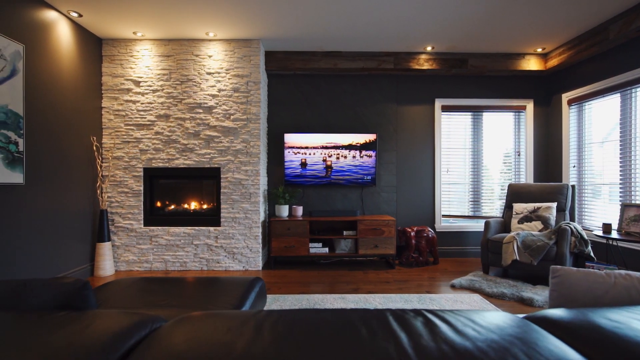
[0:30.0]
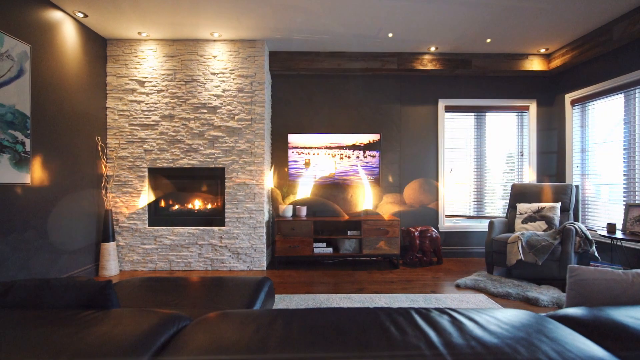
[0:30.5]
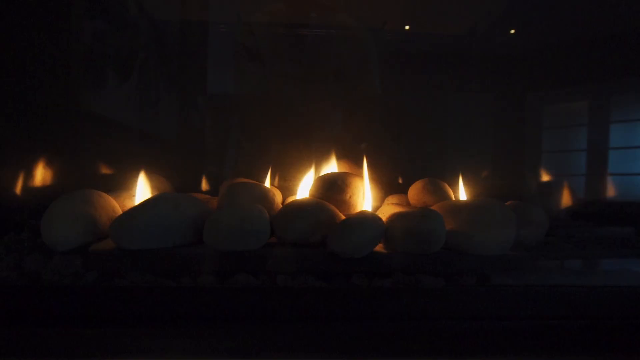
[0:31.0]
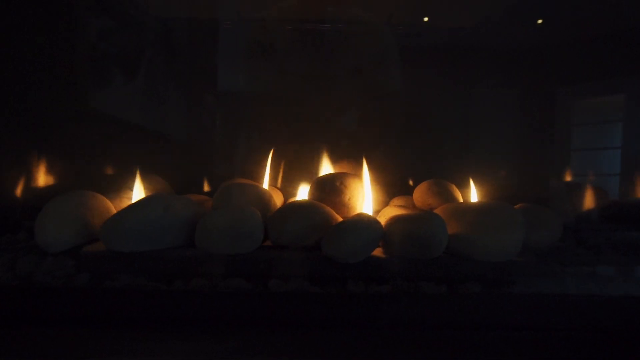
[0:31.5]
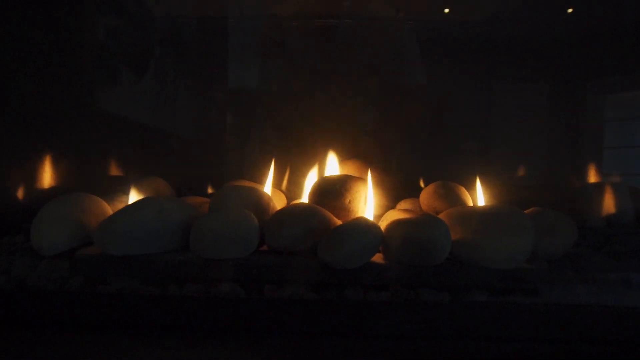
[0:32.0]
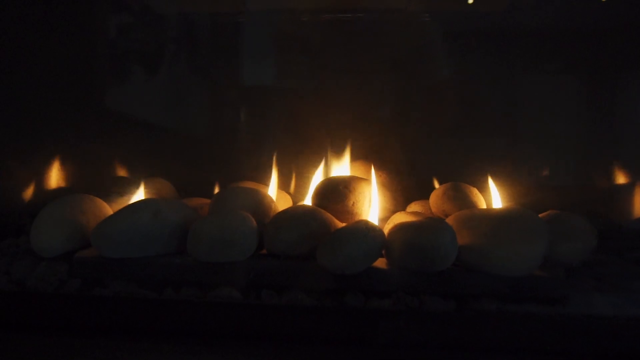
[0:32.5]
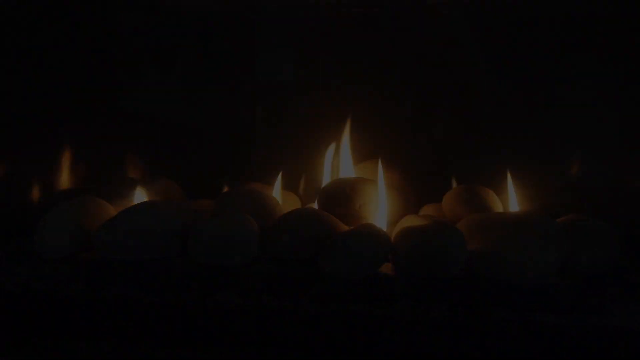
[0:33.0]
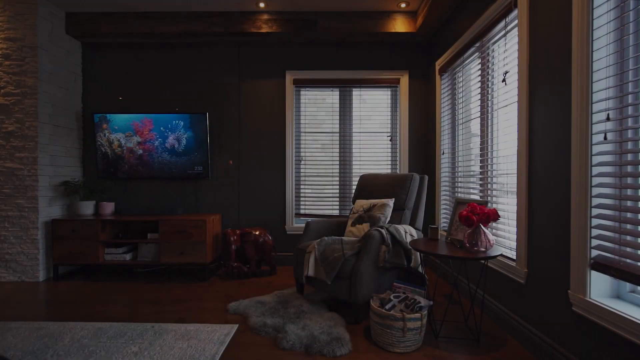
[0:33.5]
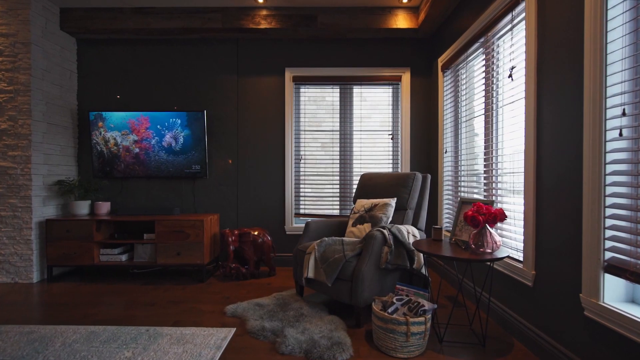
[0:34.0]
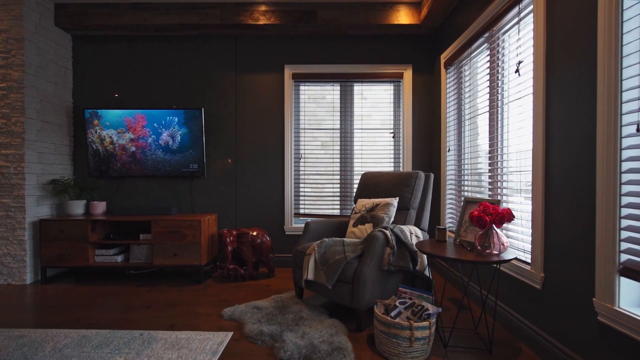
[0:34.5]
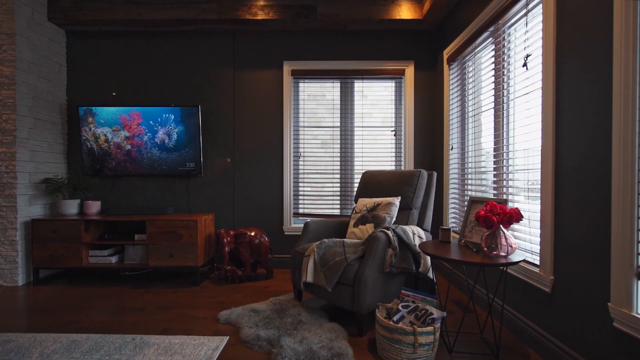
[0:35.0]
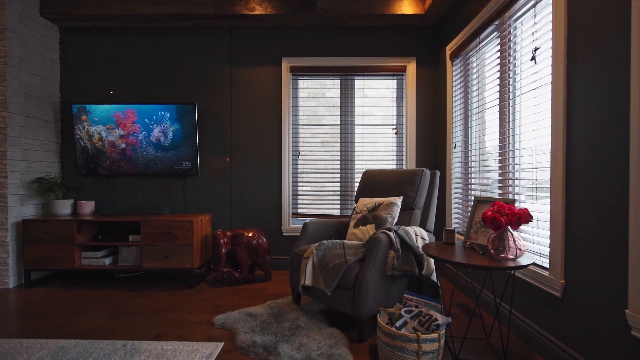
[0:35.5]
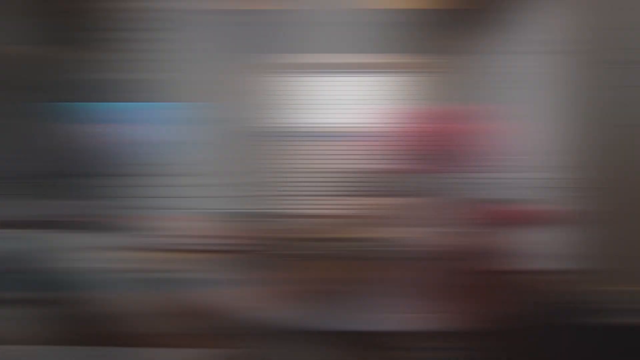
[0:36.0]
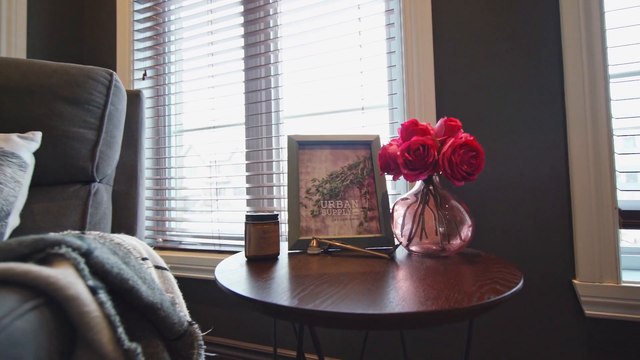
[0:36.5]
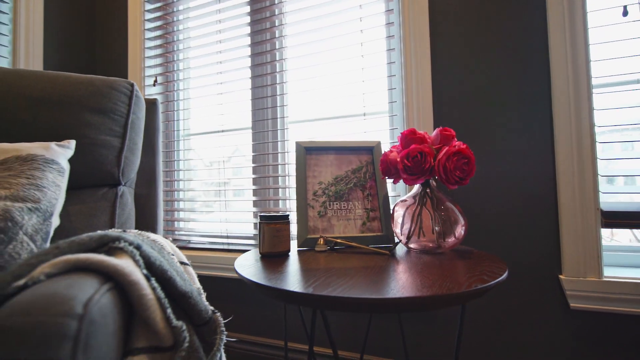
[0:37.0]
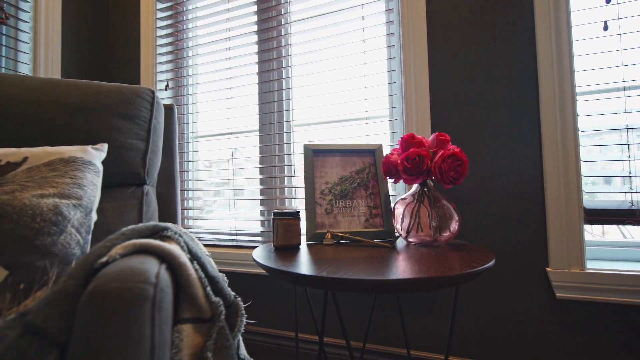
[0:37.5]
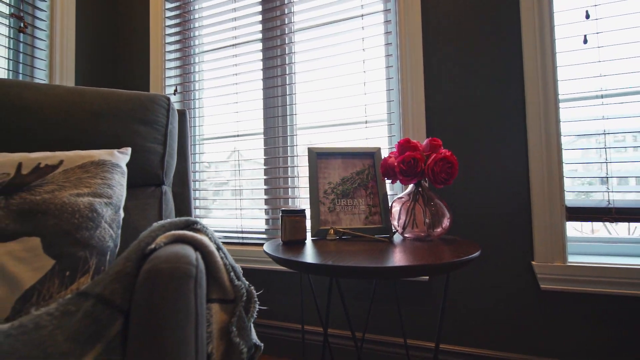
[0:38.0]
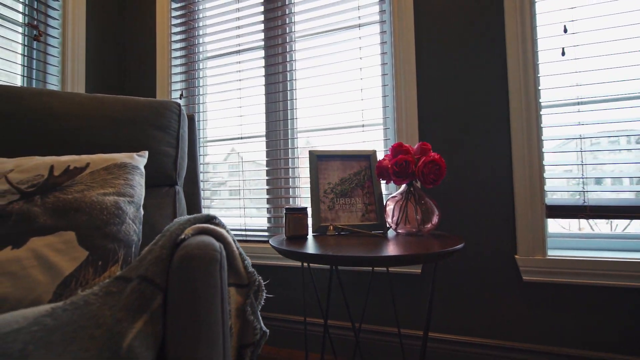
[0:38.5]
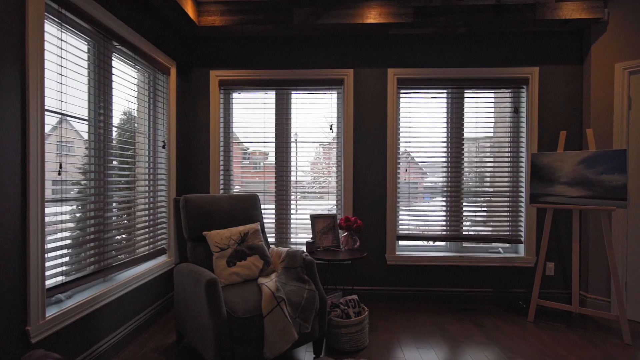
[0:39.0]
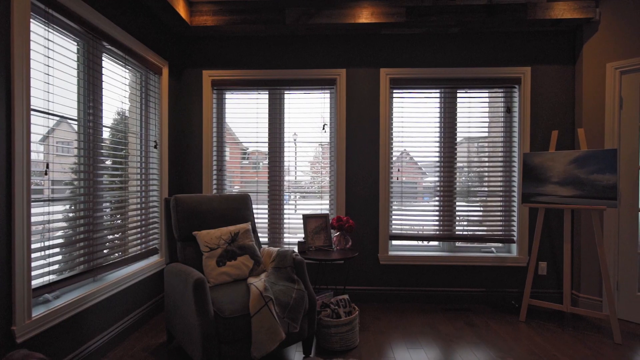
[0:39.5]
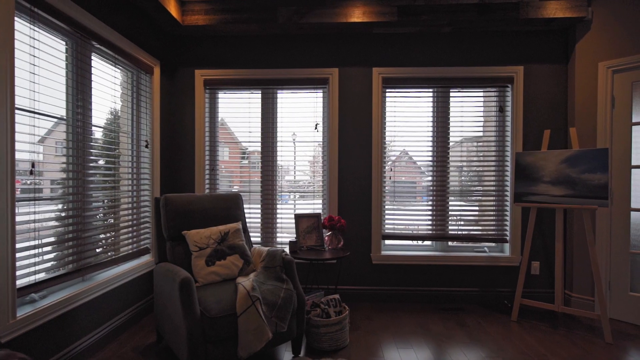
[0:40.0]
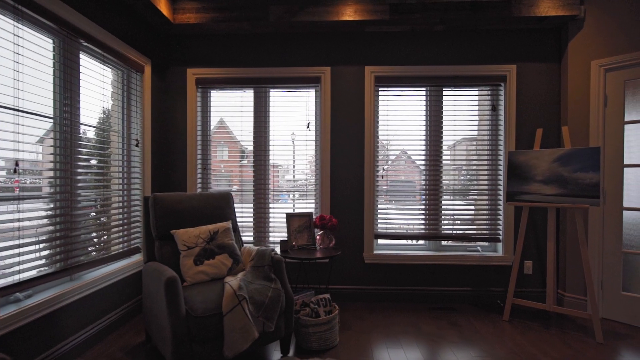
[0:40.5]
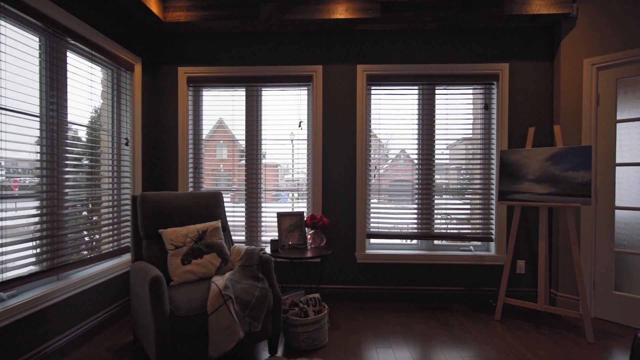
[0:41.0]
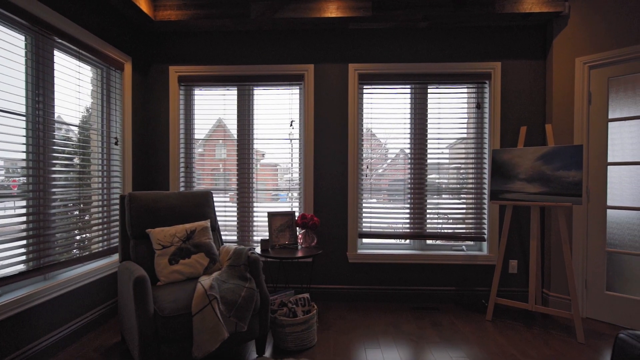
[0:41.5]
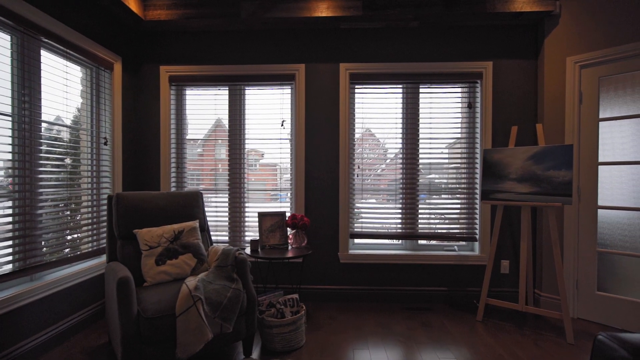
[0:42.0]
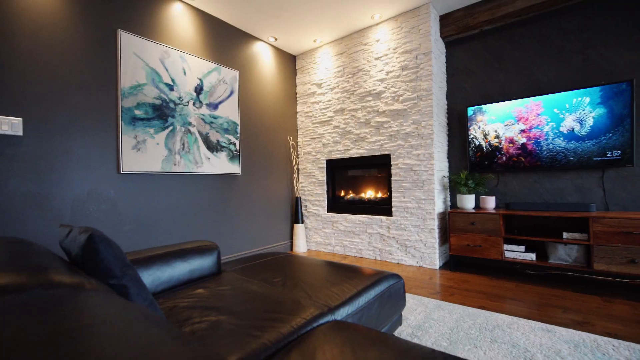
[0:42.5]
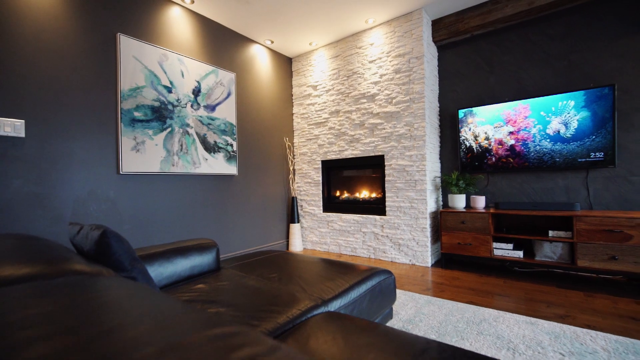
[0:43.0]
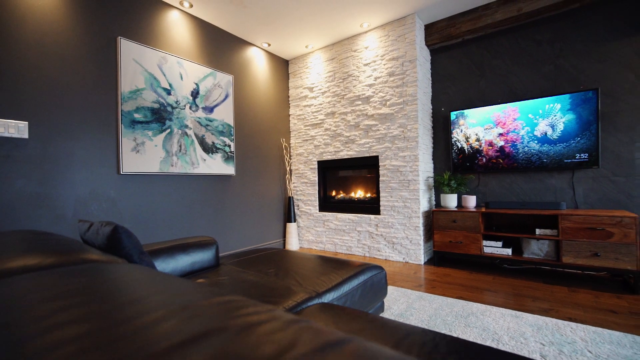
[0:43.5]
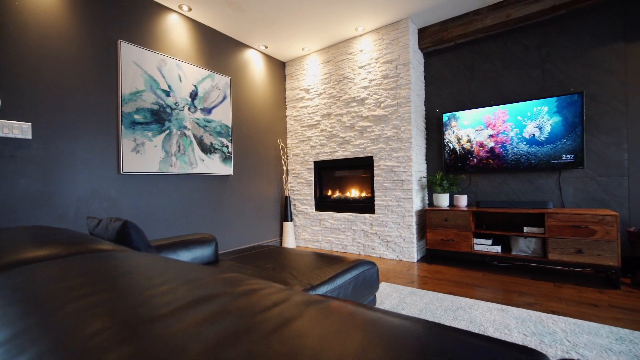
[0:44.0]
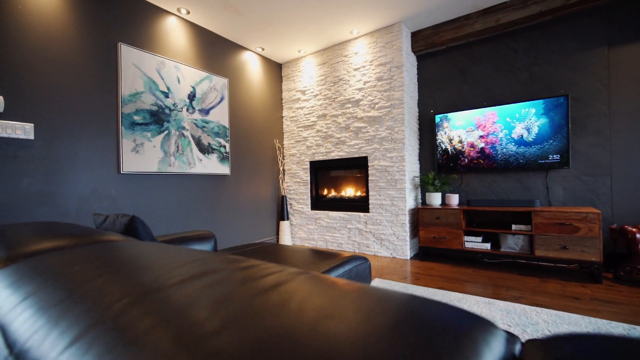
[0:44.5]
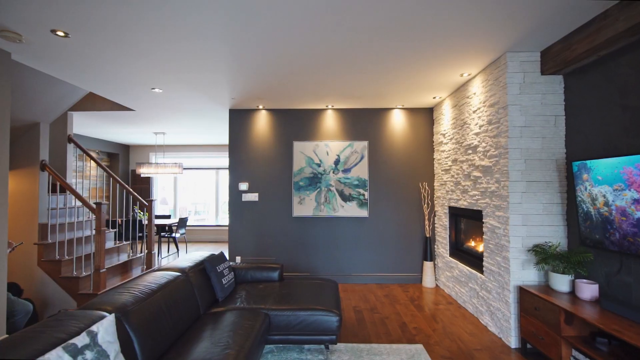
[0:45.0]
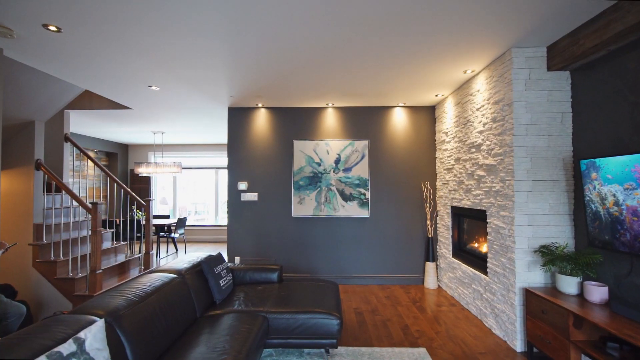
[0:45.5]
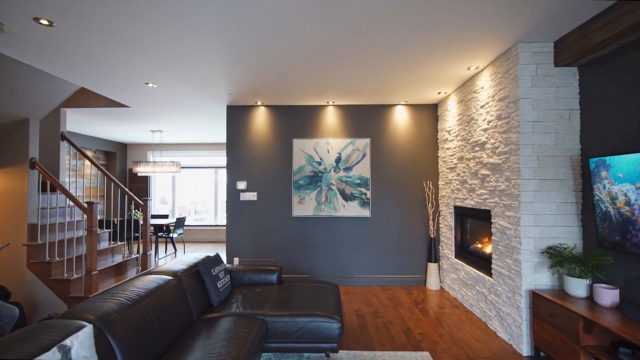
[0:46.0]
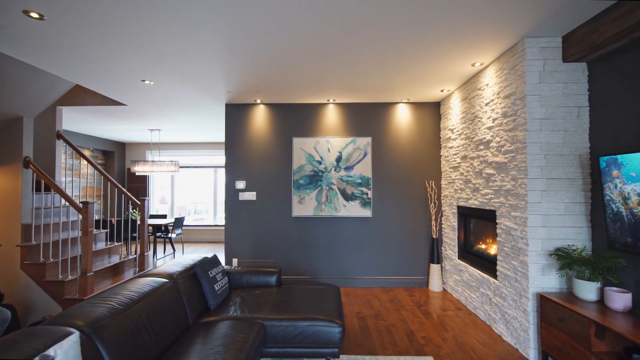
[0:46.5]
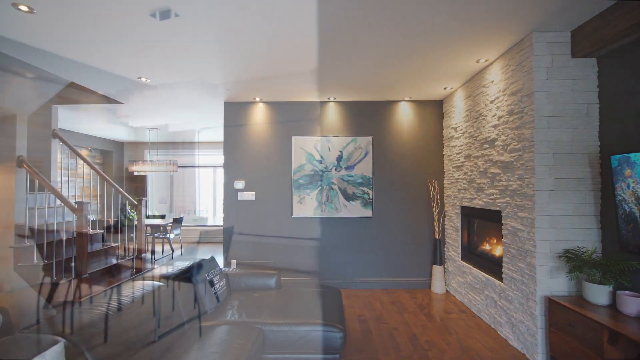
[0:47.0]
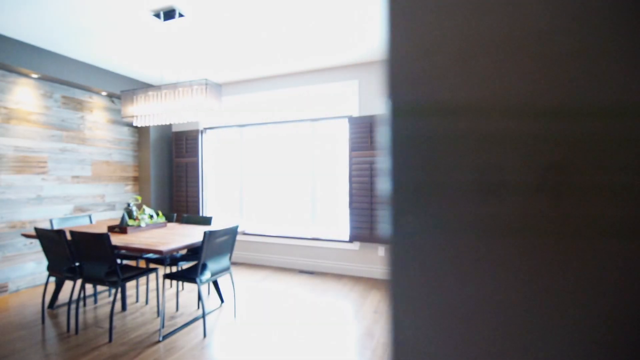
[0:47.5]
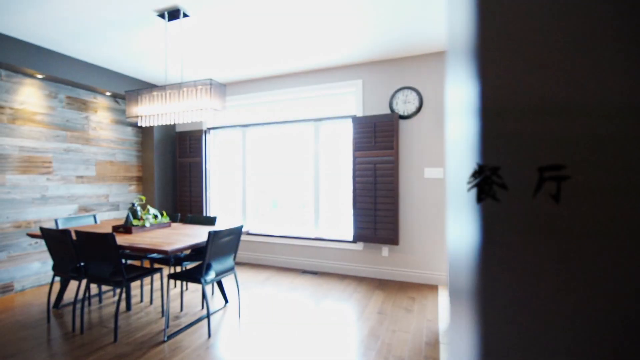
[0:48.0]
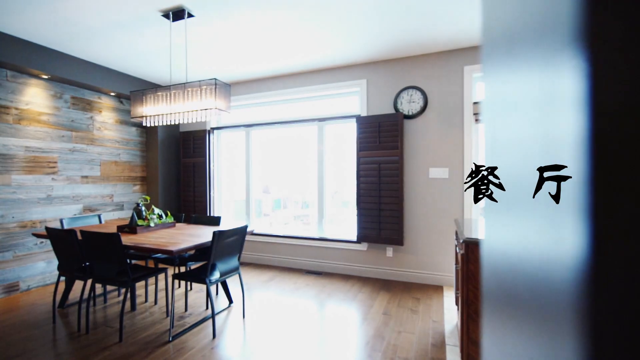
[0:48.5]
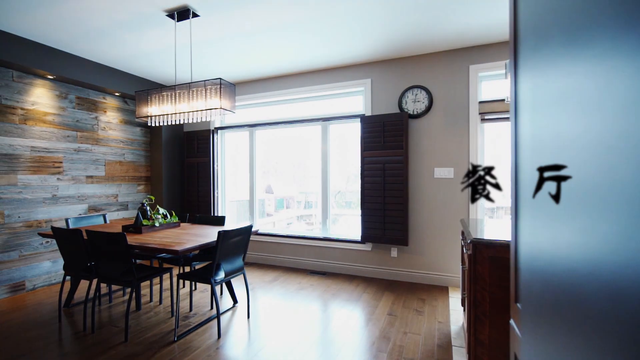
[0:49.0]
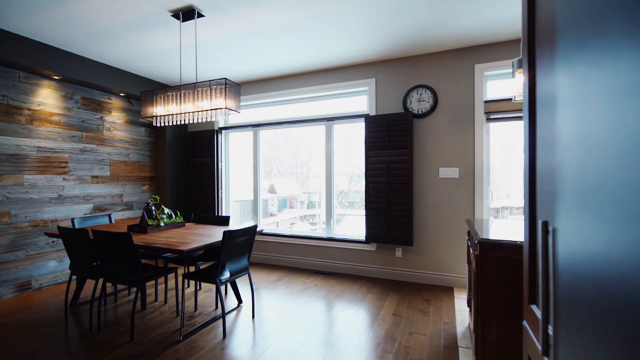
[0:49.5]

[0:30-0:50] Some flames appear at the very beginning, then the scene quickly switches back to the family room, zoomed in on the right portion of the room. There are three windows with the blinds down, a gray reclining chair, a small end table with some flowers, and a picture frame. To the left of that are a small dresser and a TV showing an underwater screen display. The image morphs to a very close view of the end table, and the camera slowly zooms outward. A new angle points to the right side of the house where the sectional and the end table are, now in the back of the room, with a painting stand holding a painting on the right-hand side. The camera changes again, pointing at the fireplace in the back corner with the TV to the right of it. It then shows the opposite end of the room and what looks like the dining room.